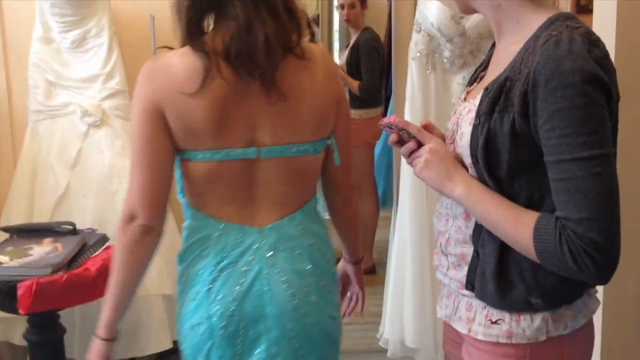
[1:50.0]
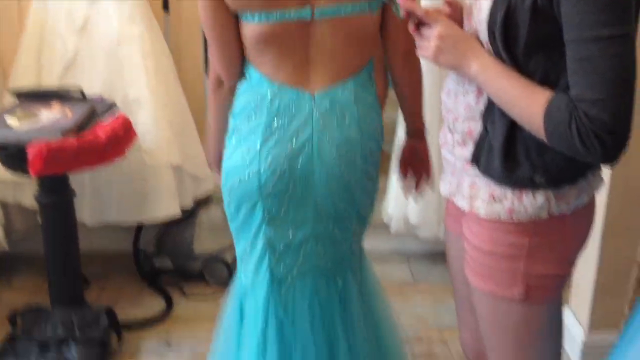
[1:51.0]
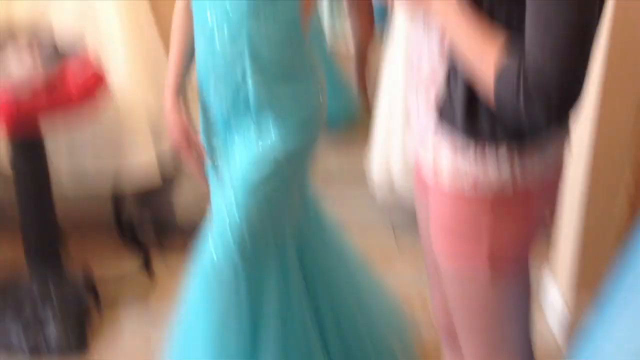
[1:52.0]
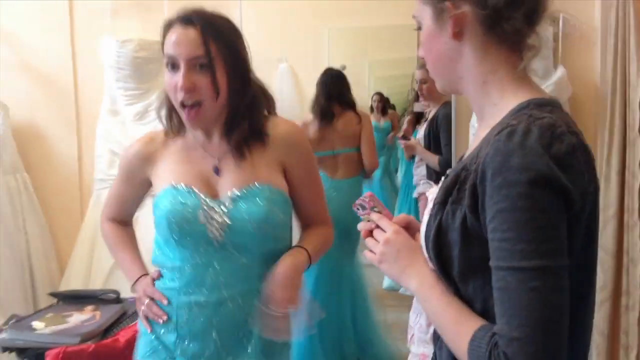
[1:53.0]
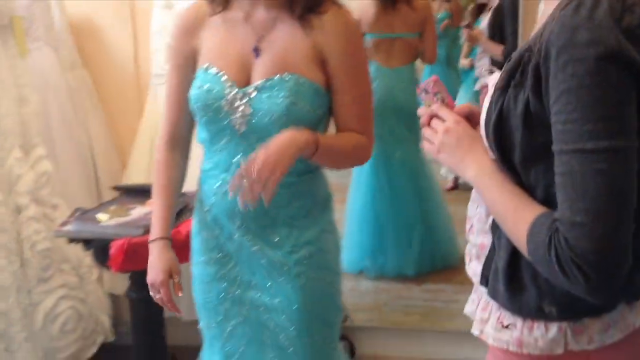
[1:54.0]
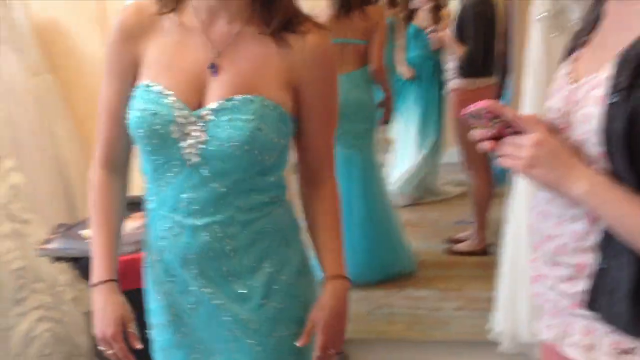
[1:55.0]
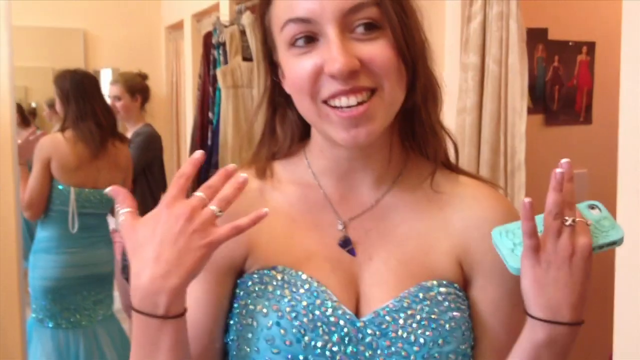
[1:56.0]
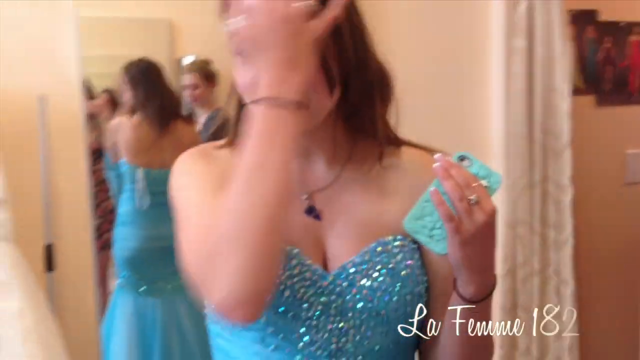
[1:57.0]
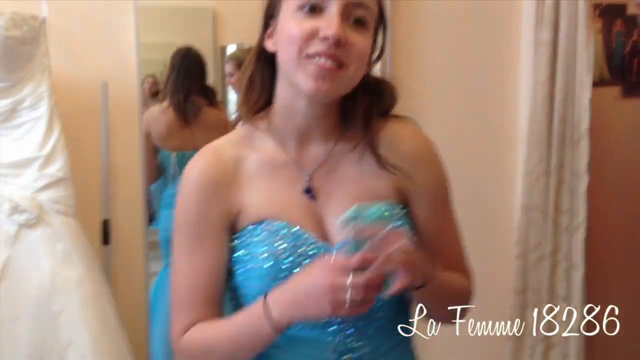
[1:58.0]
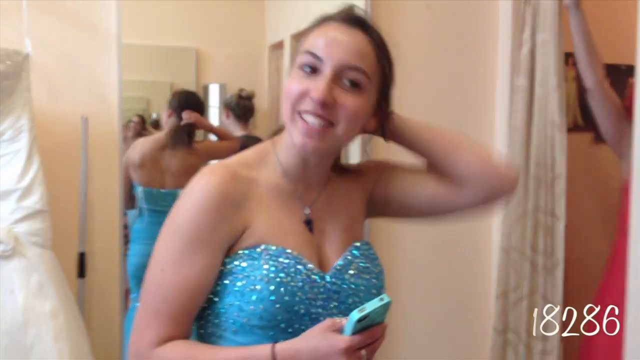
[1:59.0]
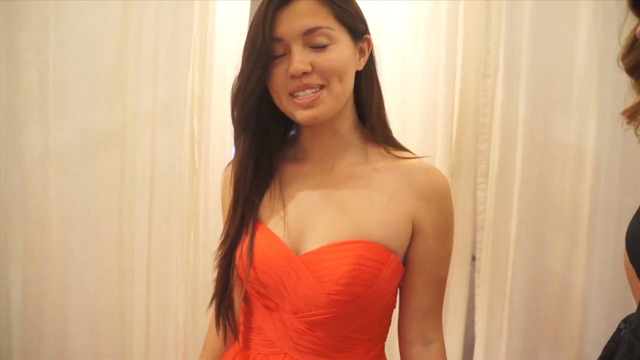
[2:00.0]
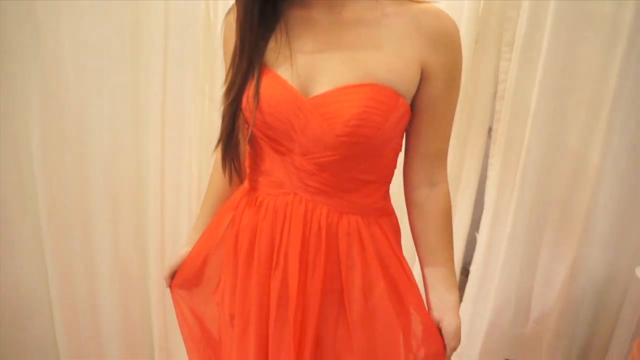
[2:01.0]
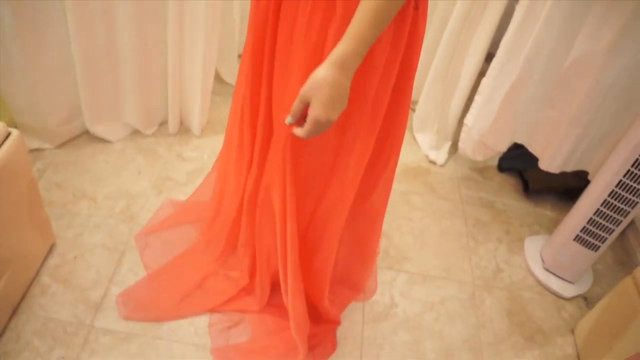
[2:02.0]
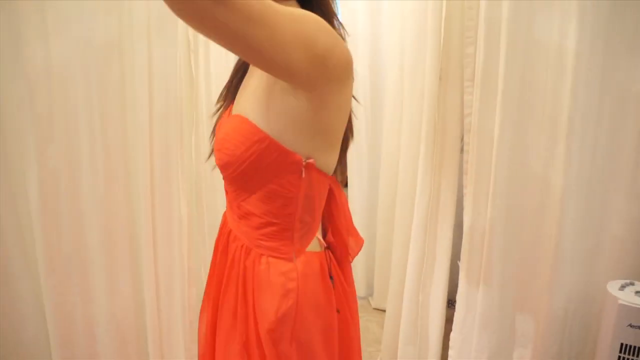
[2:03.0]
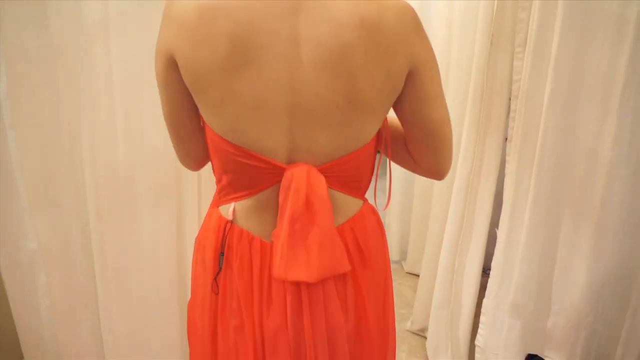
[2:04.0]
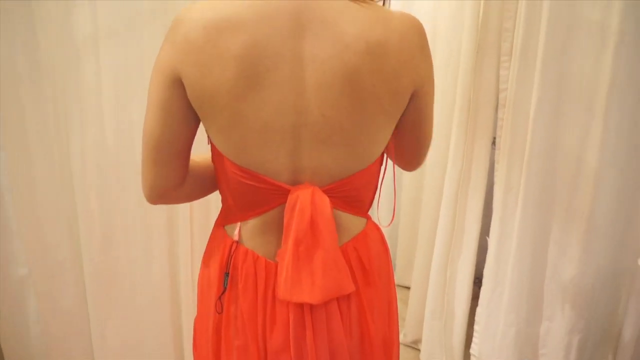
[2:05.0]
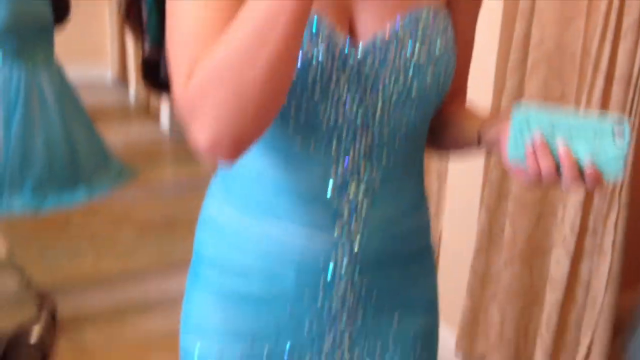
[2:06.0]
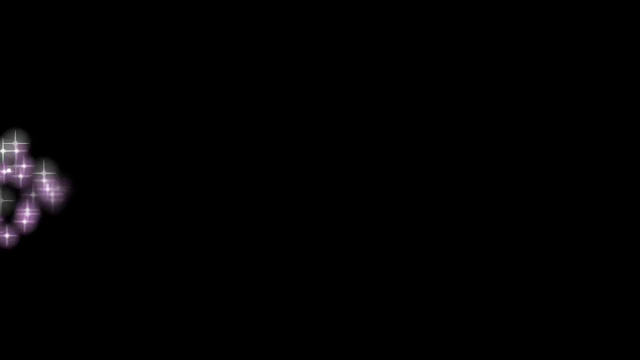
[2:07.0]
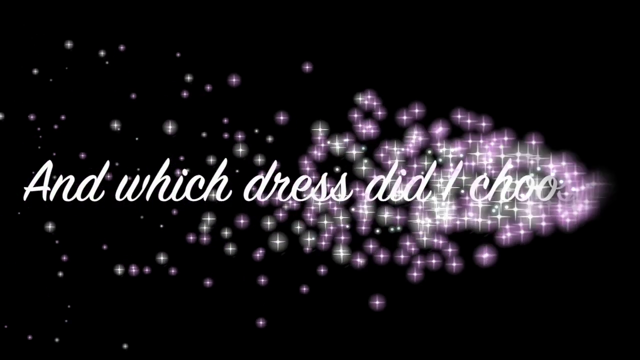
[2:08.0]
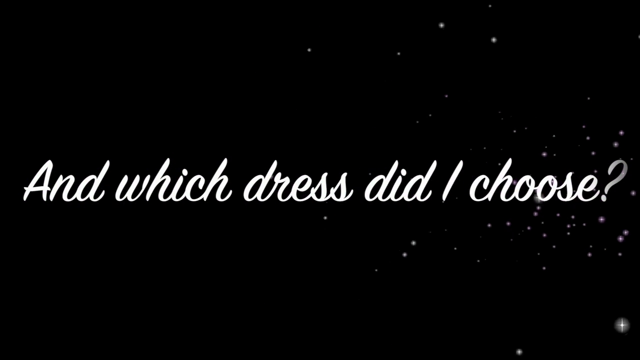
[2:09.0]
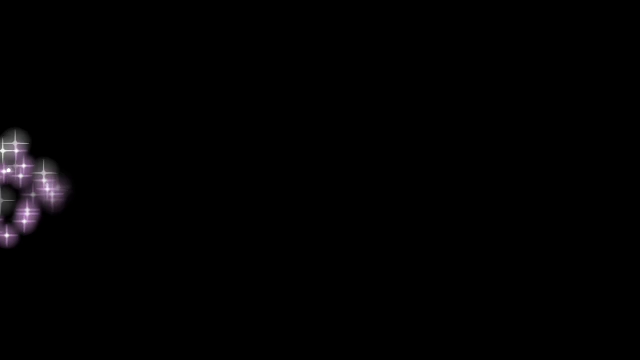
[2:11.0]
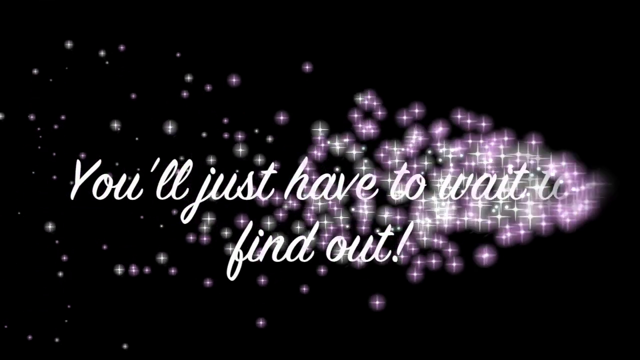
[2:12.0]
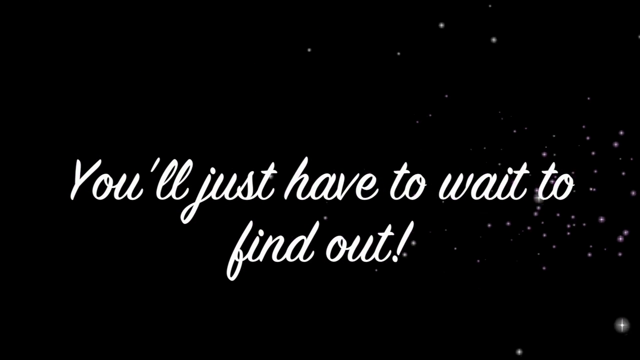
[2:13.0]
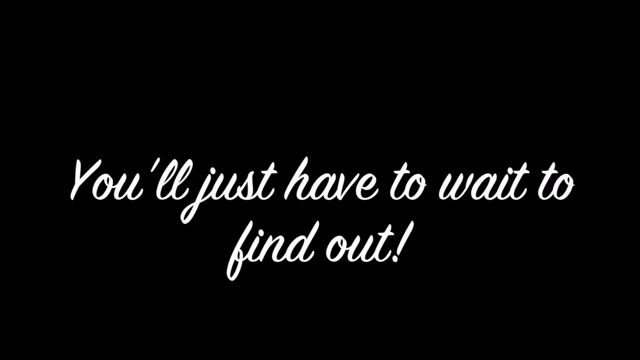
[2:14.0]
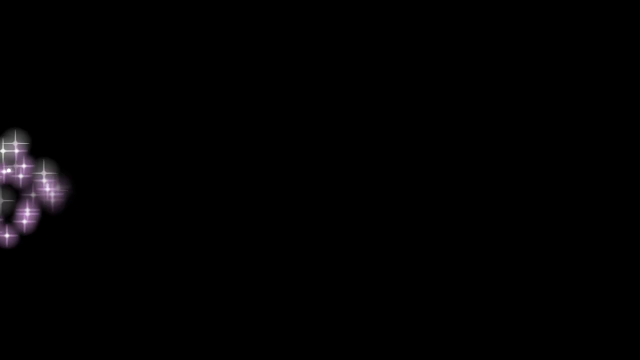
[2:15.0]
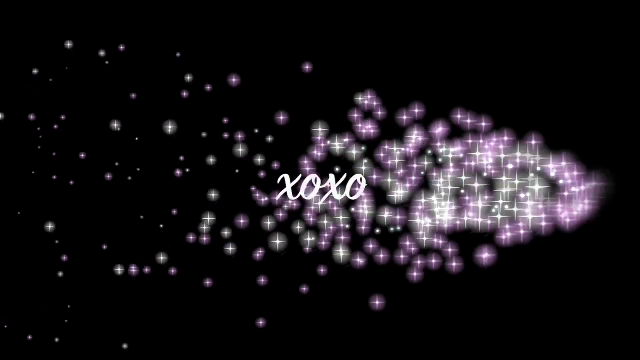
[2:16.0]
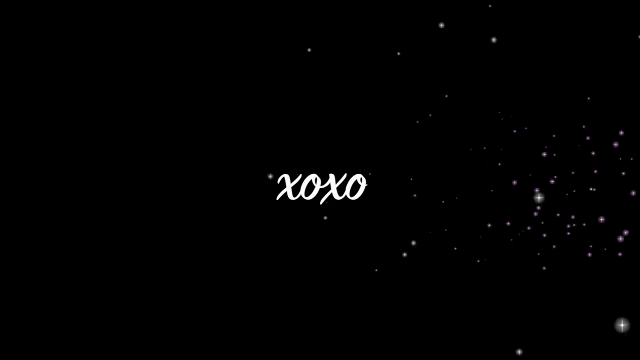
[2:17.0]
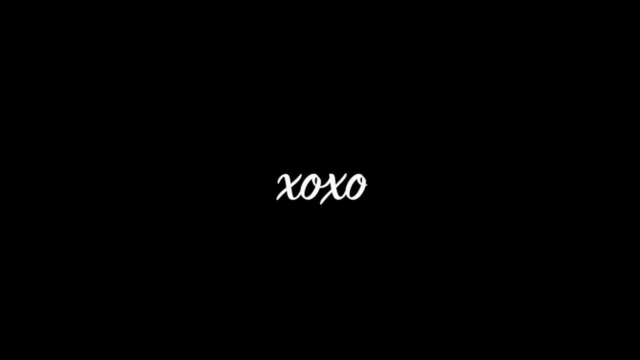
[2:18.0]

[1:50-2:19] In the mirror, a lady is visible wearing something black, almost a jacket, over a pinkish-white dress. The lady in the blue dress smiles, and the lady wearing the orange dress is shown. The camera pans up and down; both the orange and the blue dresses are backless. The camera pans up and down fast toward the end, and curtains of a white or almost beige color are visible during the ending footage. An ending animation follows on a black background, with white lettering reading "you'll just have to wait to find out", then "XOXO" in a pinkish-white color with animated stars against the black background, before it fades out. At the end a question appears: "in which dress did I choose?"